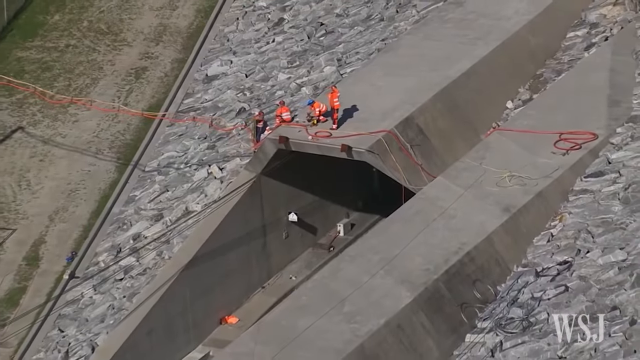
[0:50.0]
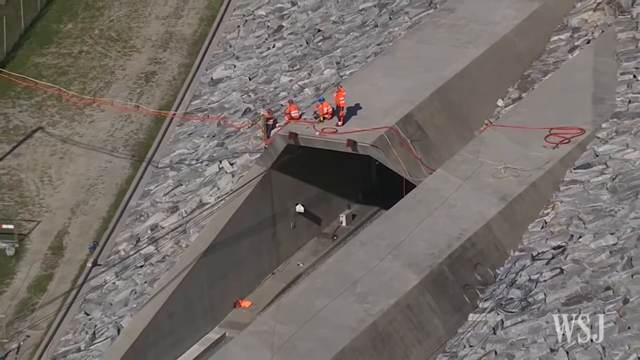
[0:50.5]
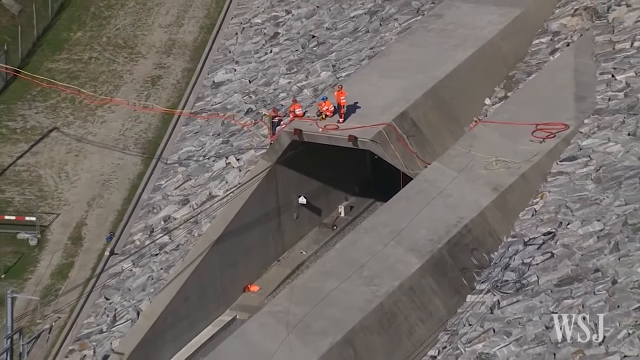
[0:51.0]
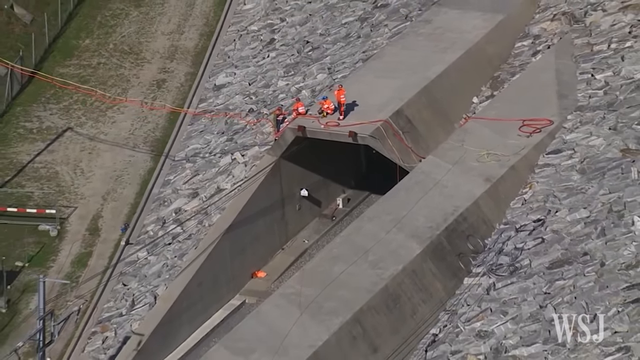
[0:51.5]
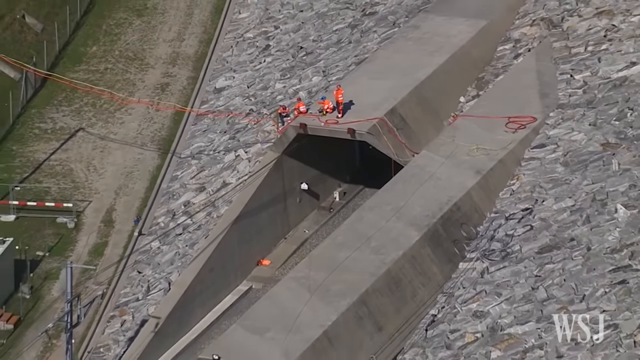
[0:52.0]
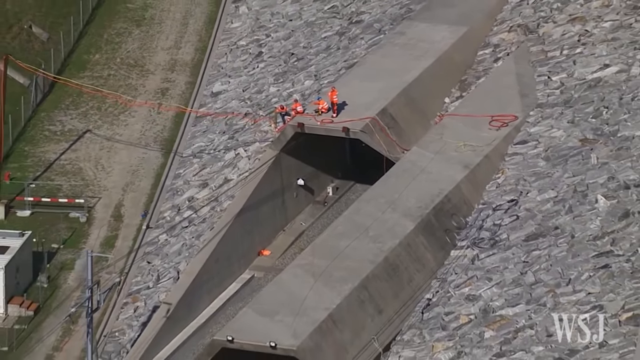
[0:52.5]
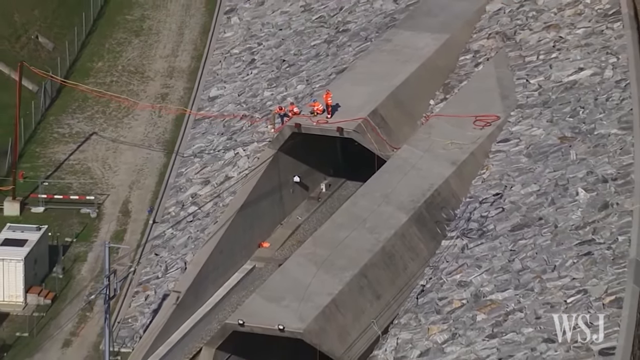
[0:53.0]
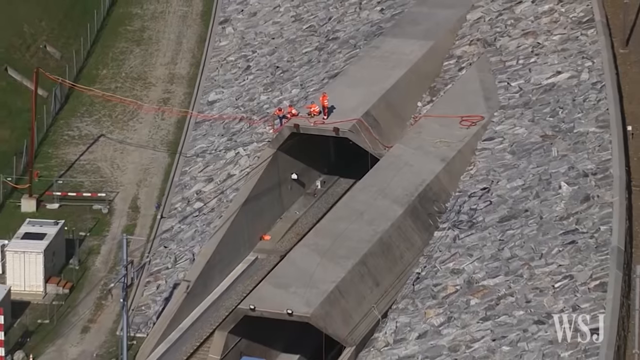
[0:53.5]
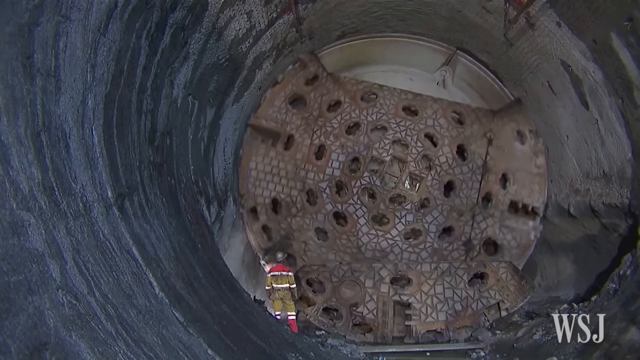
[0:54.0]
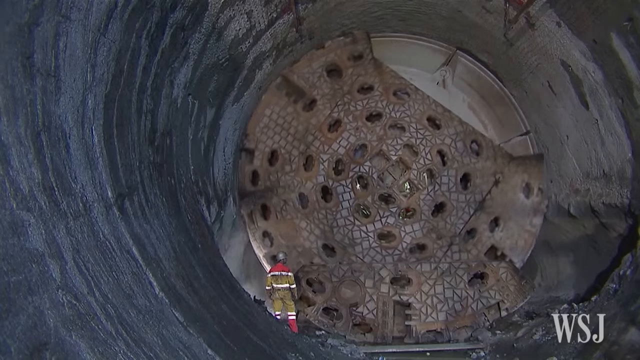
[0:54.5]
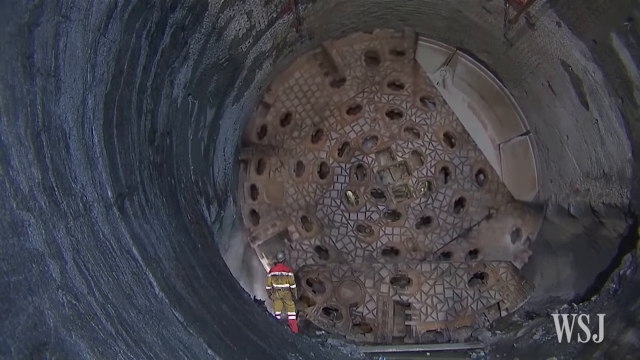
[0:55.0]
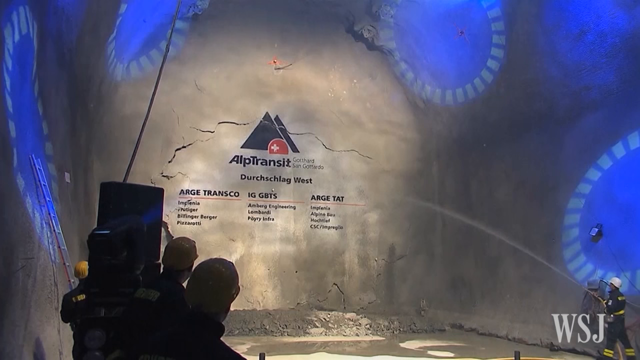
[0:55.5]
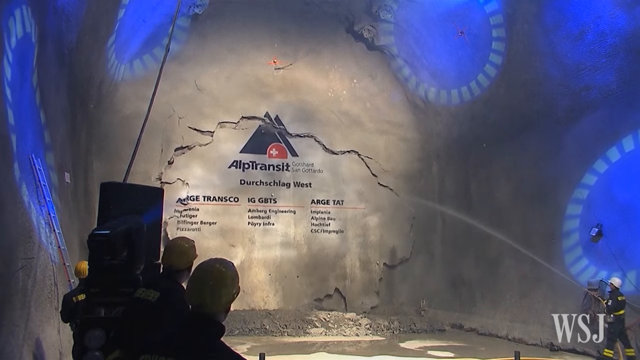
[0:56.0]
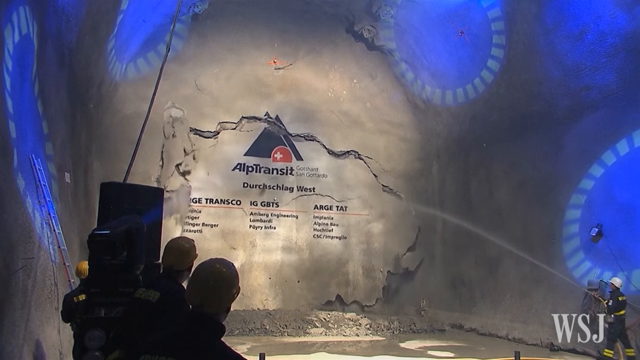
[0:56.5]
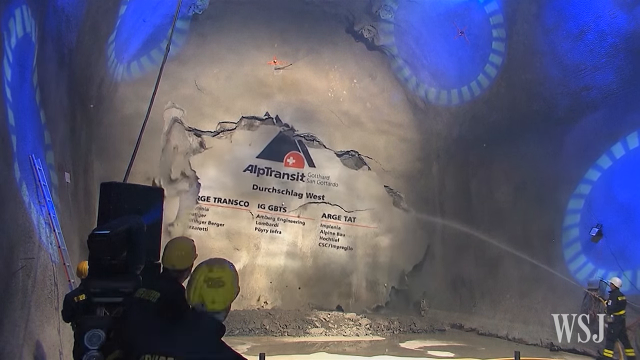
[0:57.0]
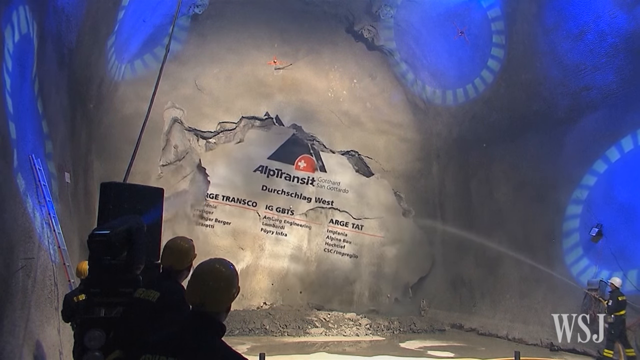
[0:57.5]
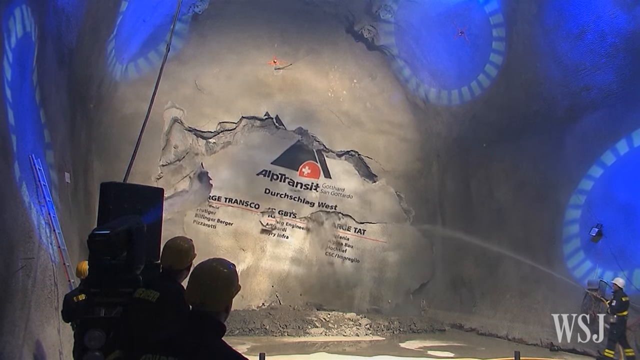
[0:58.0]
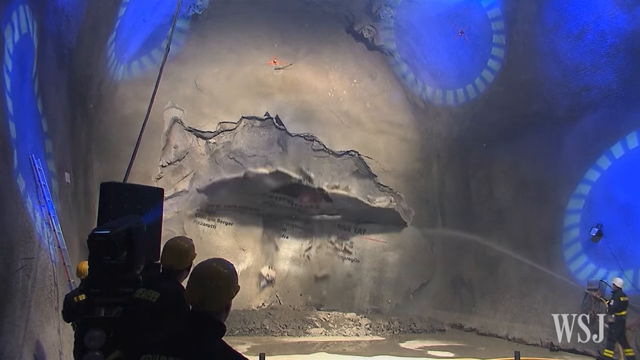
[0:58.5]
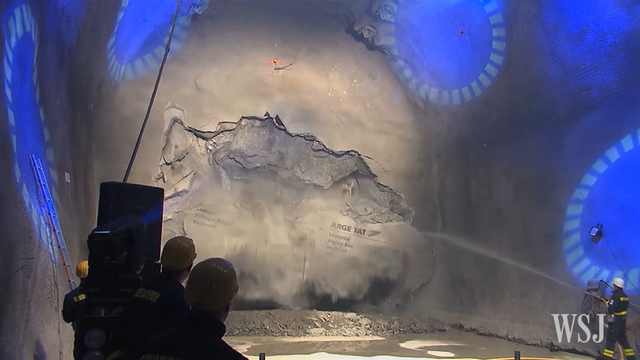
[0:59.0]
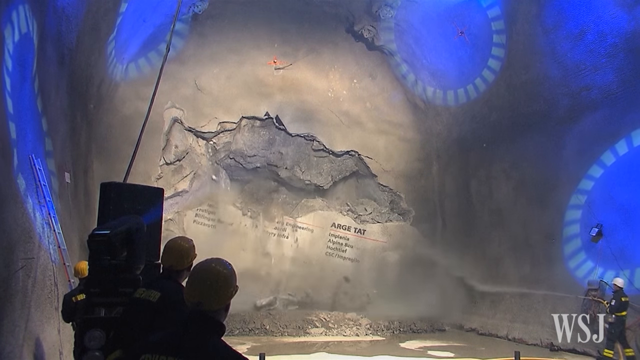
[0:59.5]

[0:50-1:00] Workers are followed by a zoomed-in shot inside a tunnel, where a big metal device whirls around, with a single worker present; the device almost looks like a gear shifting, though what it is remains unclear. The scene then moves to a place where concrete is breaking through, with a bunch of workers gathered around it. There is writing on the concrete. It cracks open while someone sprays water at it with a hose. The words "Alp Transit" appear, along with some words in Dutch or German.